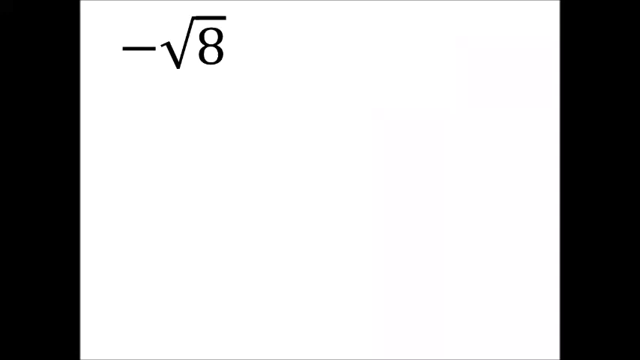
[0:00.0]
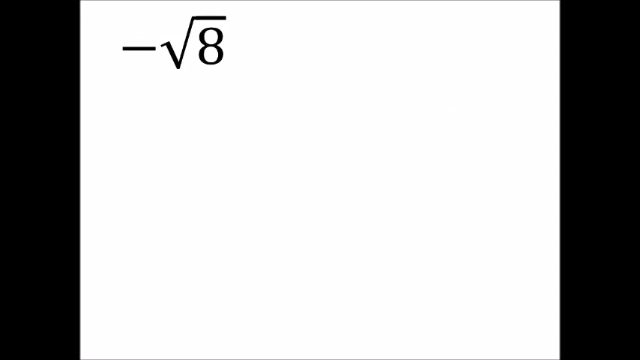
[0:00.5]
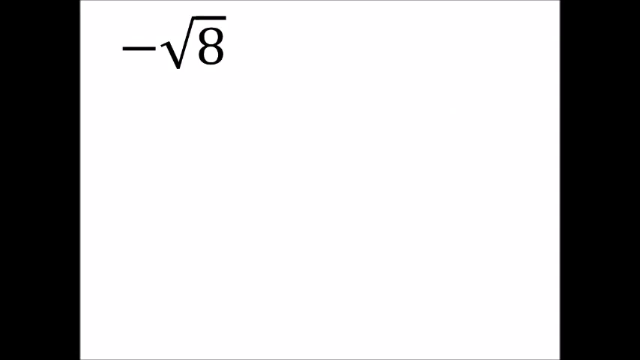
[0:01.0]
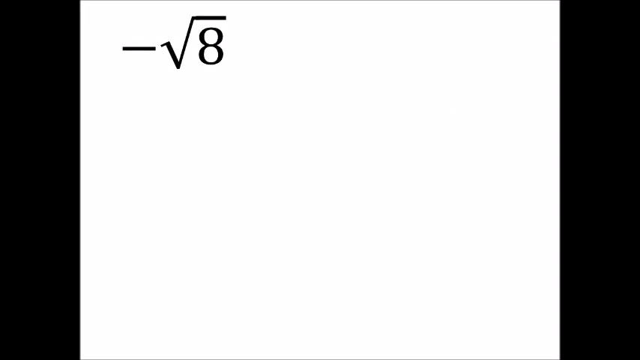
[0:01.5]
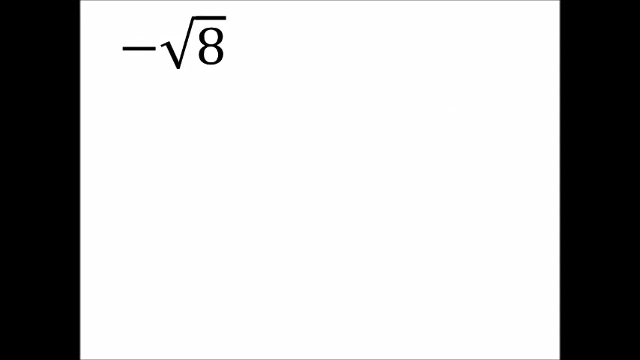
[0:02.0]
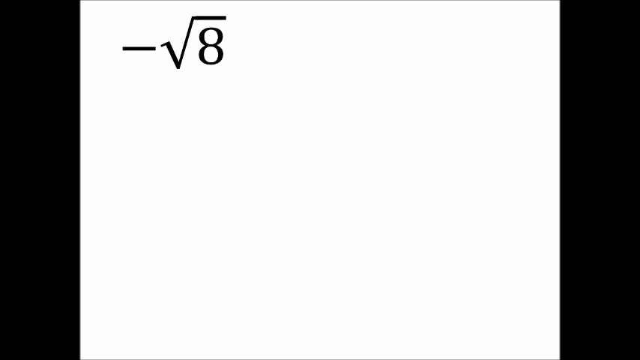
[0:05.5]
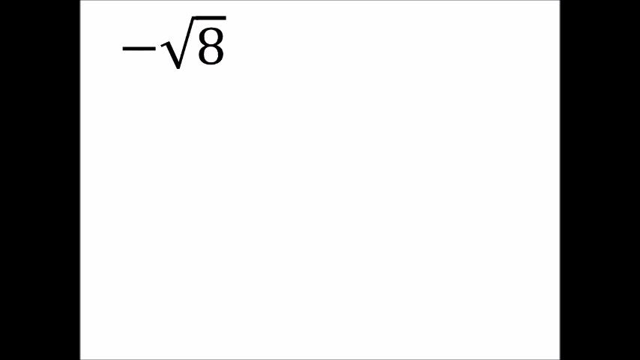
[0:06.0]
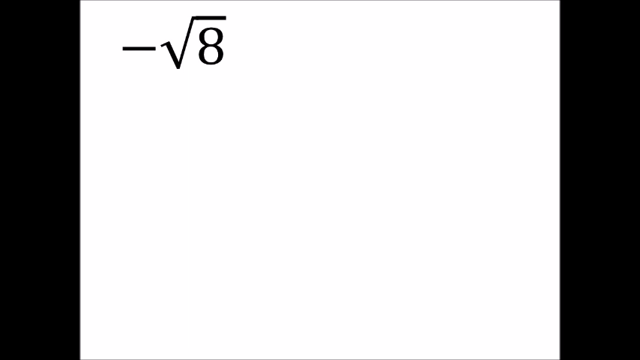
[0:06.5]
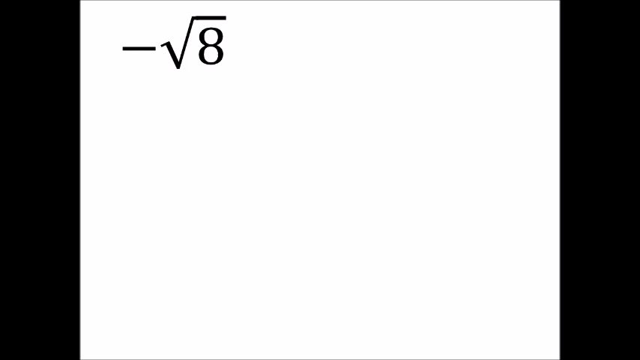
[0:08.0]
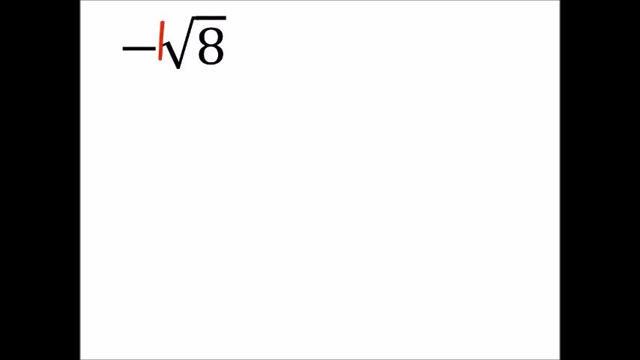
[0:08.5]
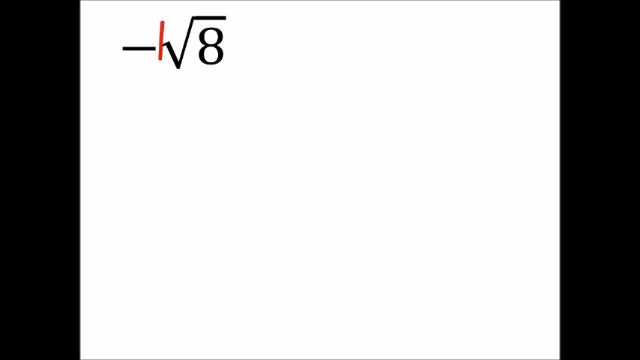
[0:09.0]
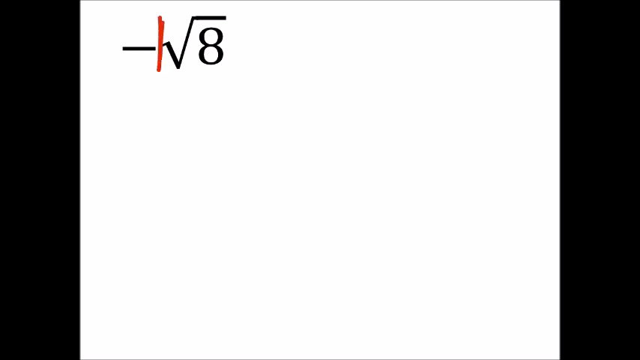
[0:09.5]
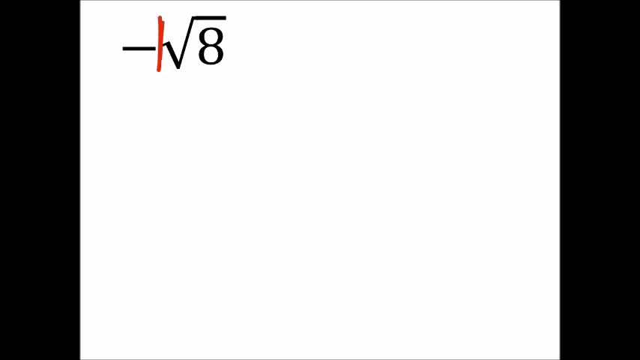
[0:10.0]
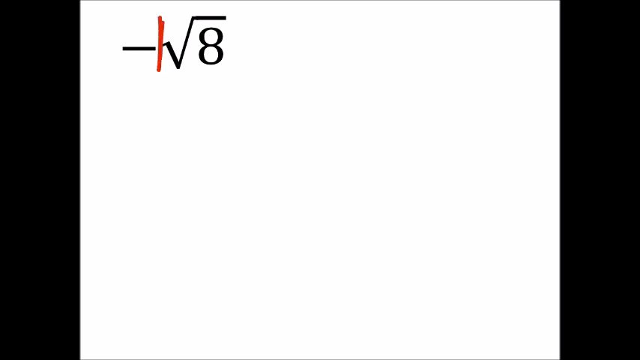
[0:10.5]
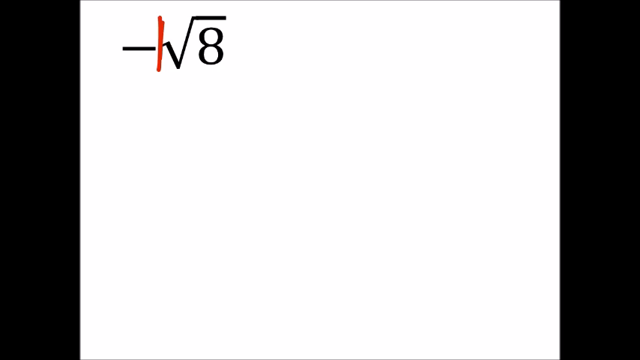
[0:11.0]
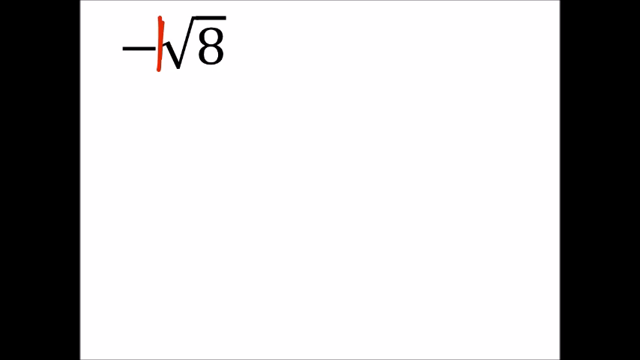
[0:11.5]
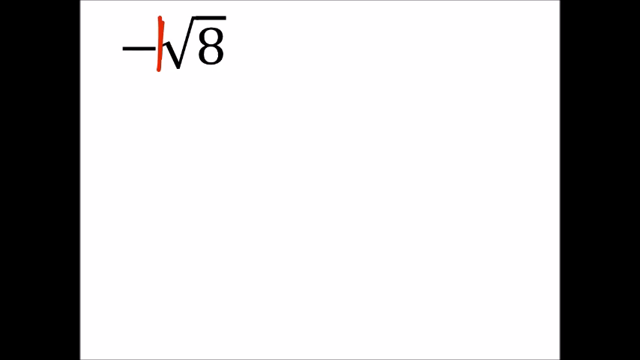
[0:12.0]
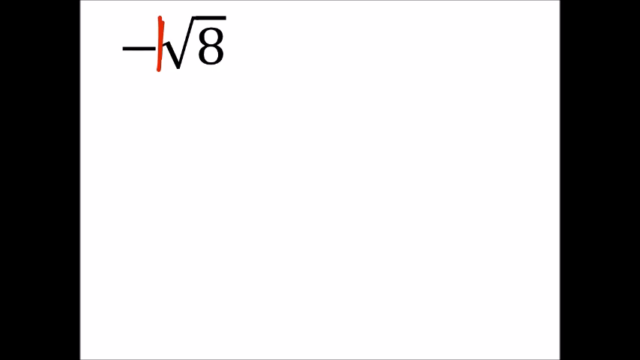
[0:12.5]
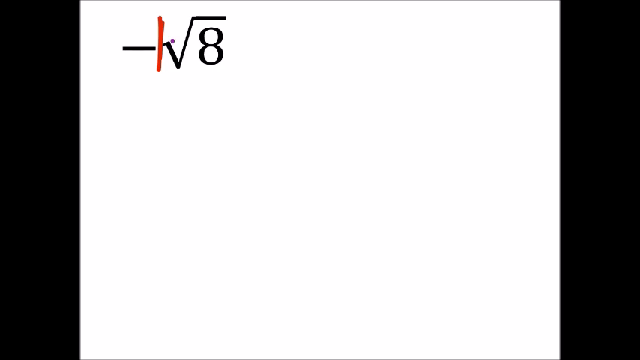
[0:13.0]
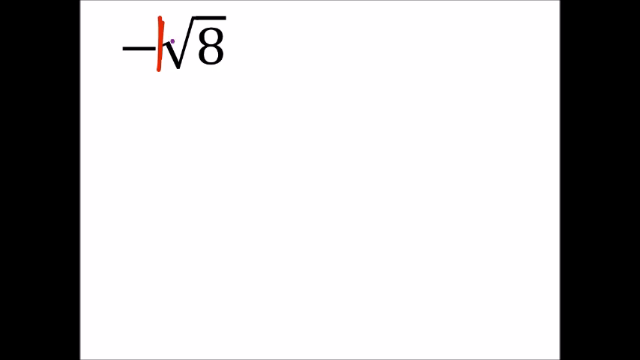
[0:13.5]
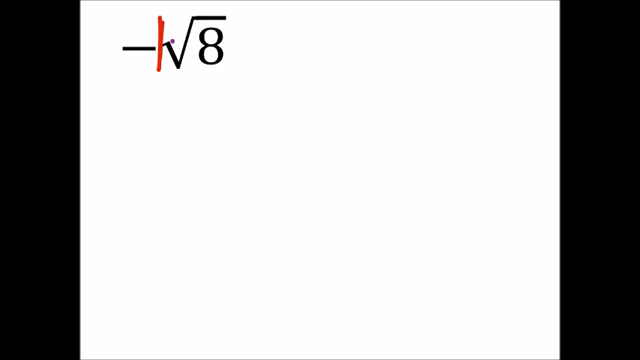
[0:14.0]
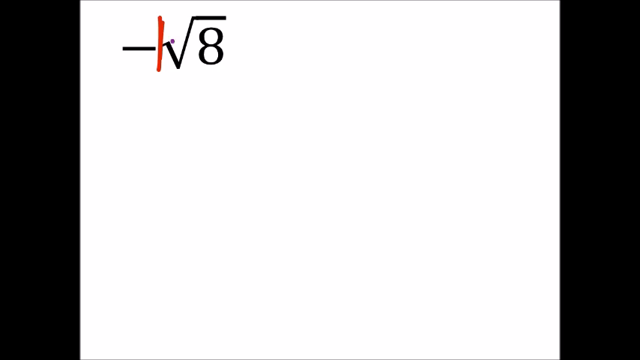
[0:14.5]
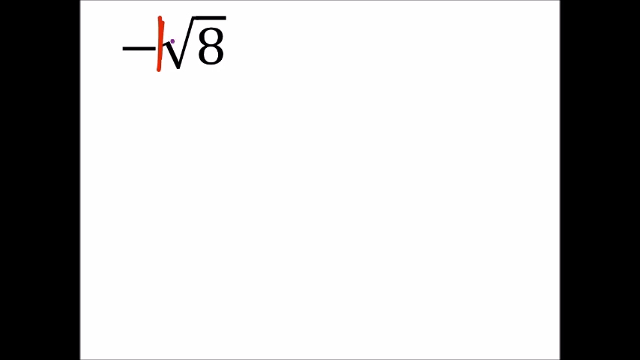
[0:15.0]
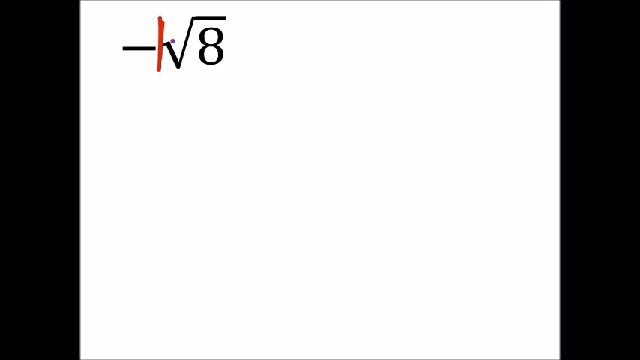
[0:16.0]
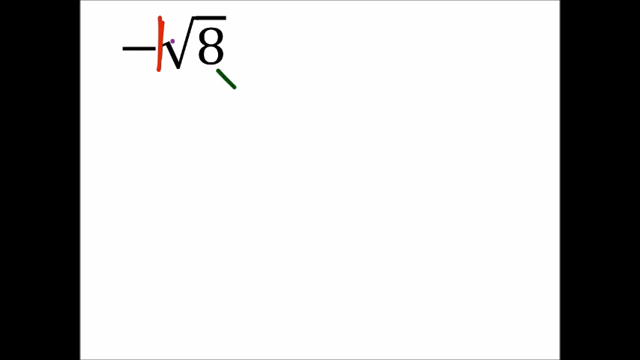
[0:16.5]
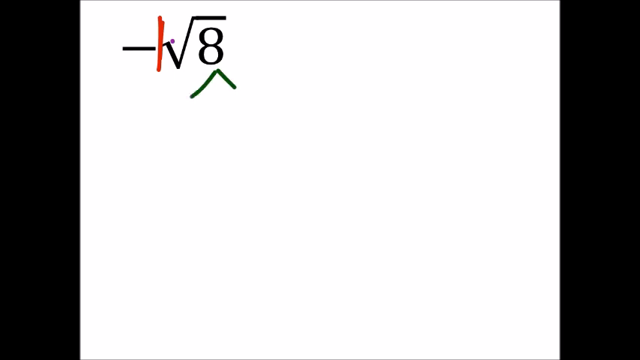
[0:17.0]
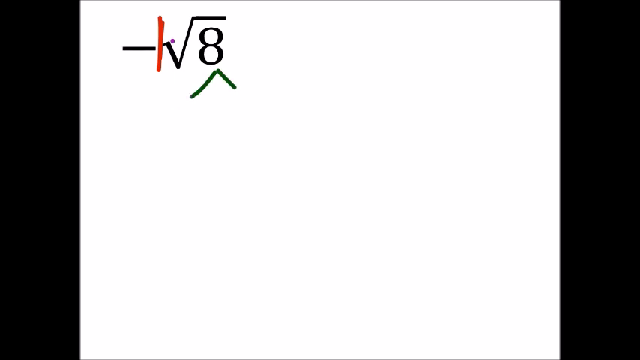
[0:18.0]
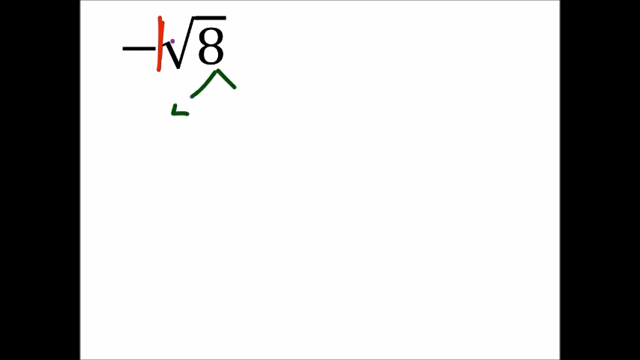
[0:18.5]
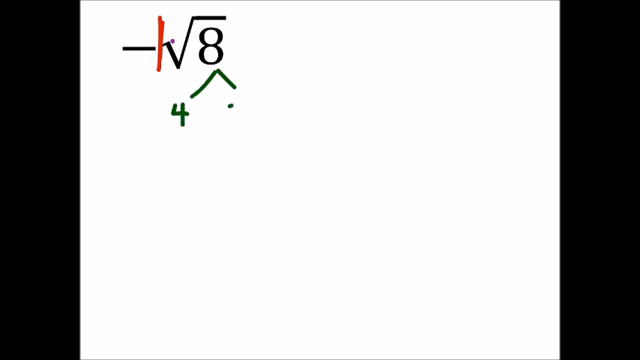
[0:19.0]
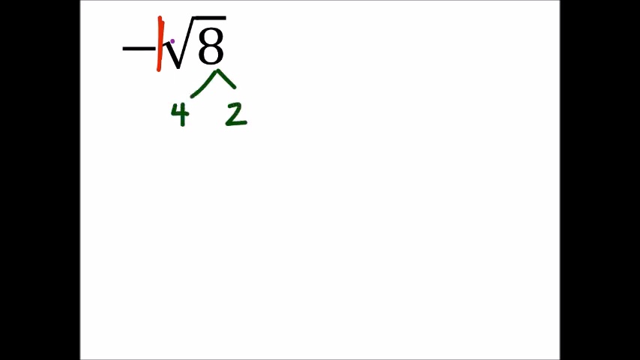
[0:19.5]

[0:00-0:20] A white square appears to be on top of a black square; the frame is white in the middle and black on the sides. On it is what looks like the beginning of a mathematics sum: a negative square root of the number 8. Someone then writes next to the negative sign with a red pen, scribbling in between the negative sign and the square root sign. They then draw an upside-down V in green and add numbers on either side of it: the number 4 at the left point and the number 2 at the right point.